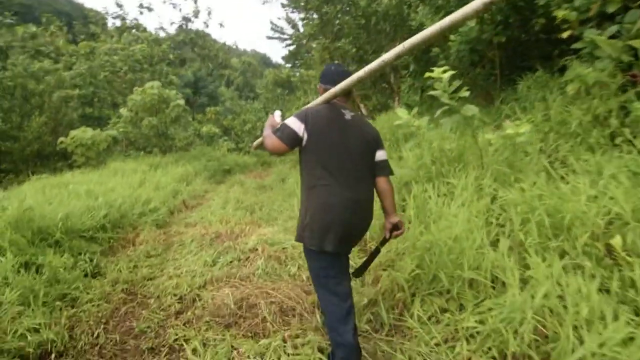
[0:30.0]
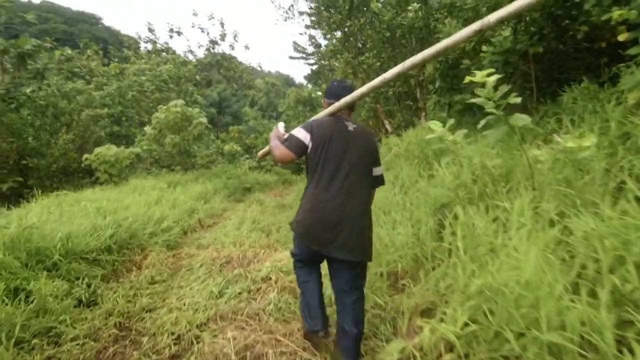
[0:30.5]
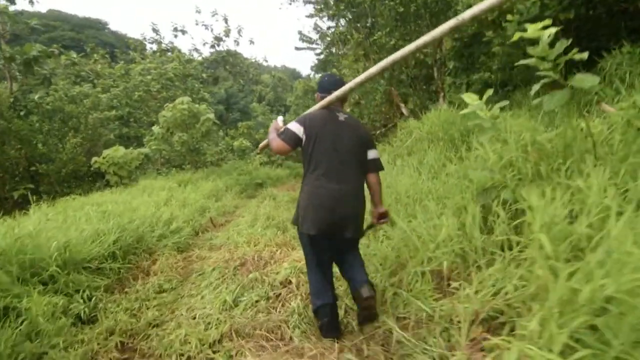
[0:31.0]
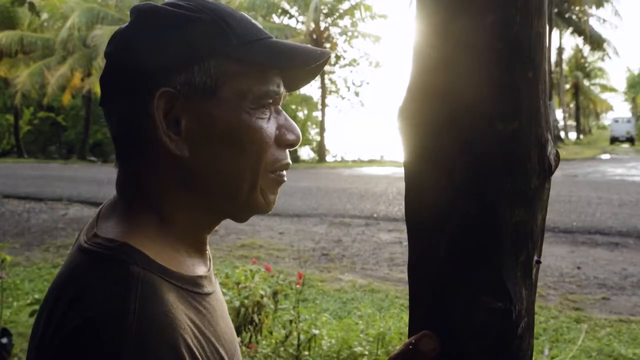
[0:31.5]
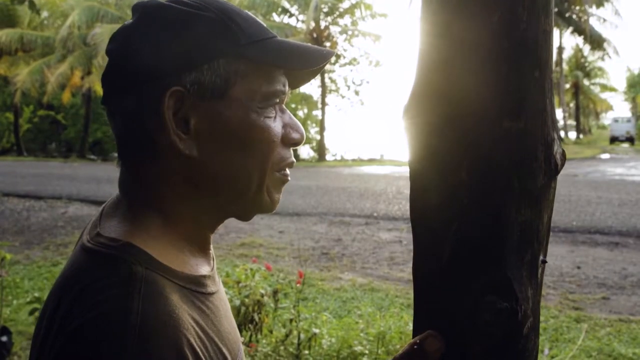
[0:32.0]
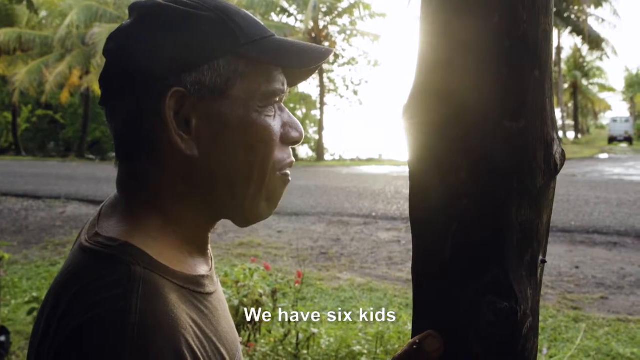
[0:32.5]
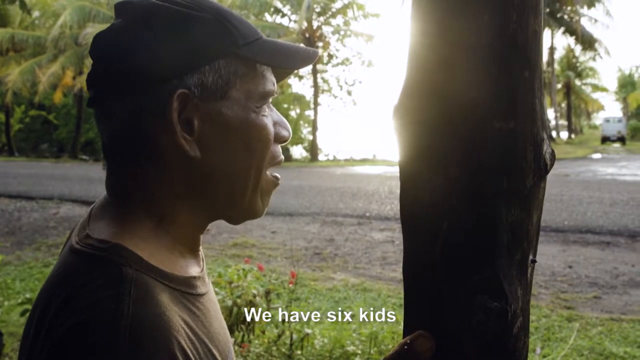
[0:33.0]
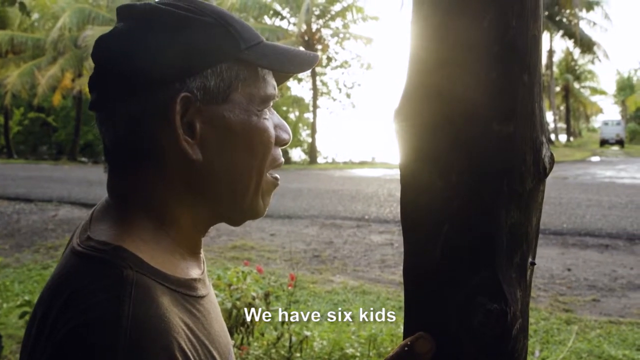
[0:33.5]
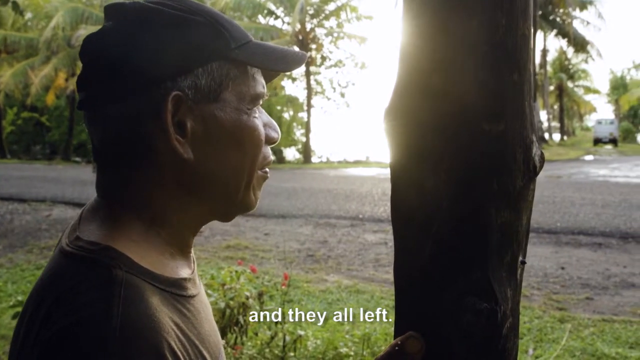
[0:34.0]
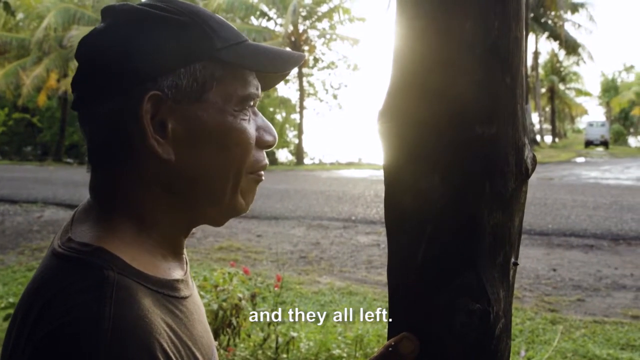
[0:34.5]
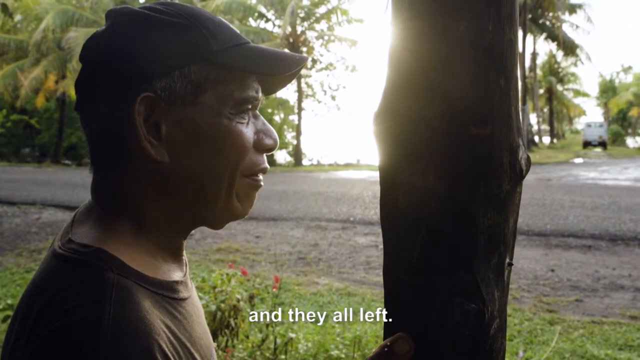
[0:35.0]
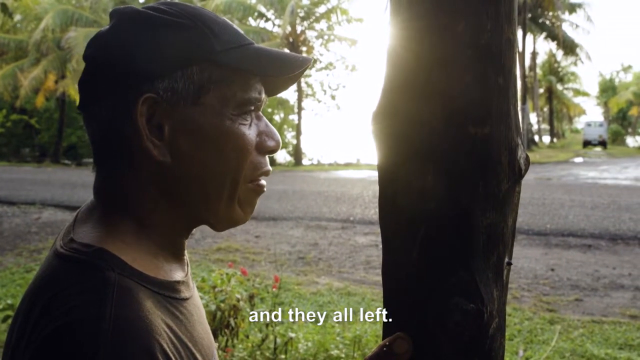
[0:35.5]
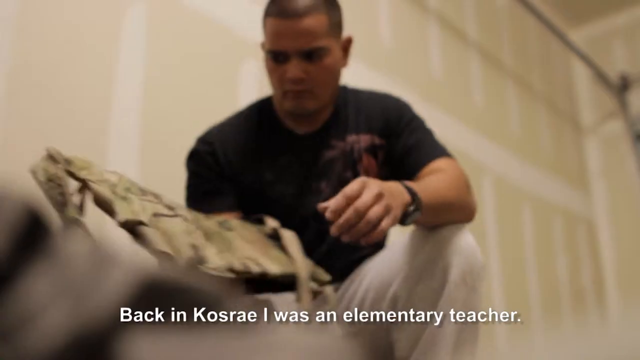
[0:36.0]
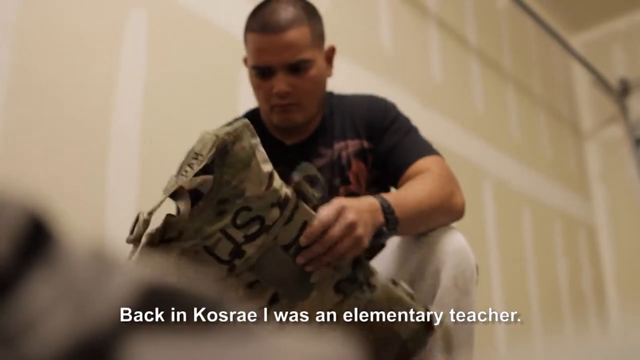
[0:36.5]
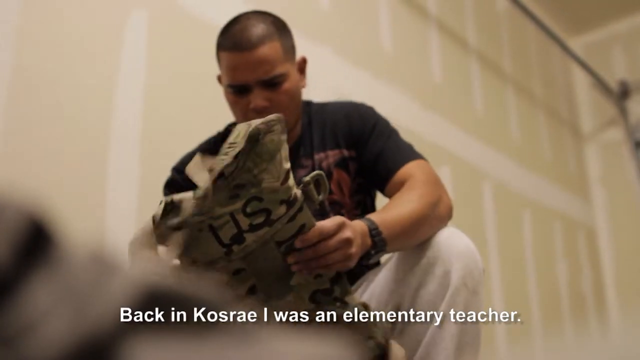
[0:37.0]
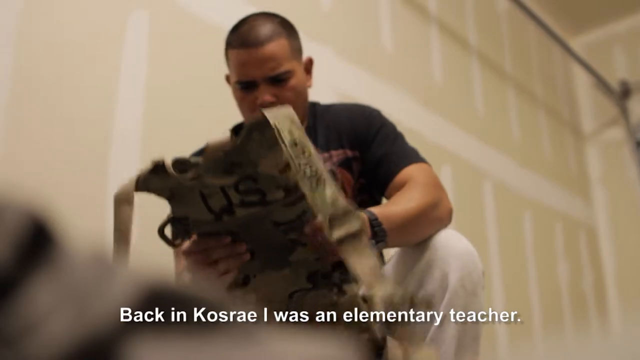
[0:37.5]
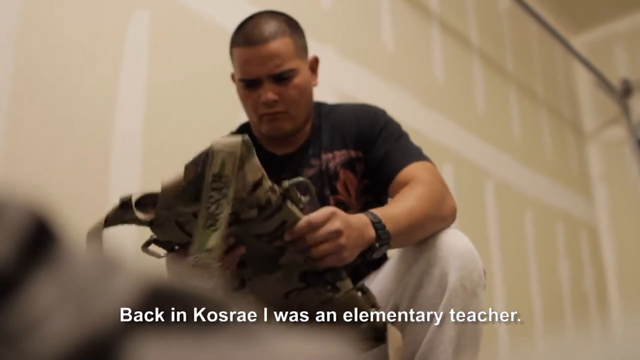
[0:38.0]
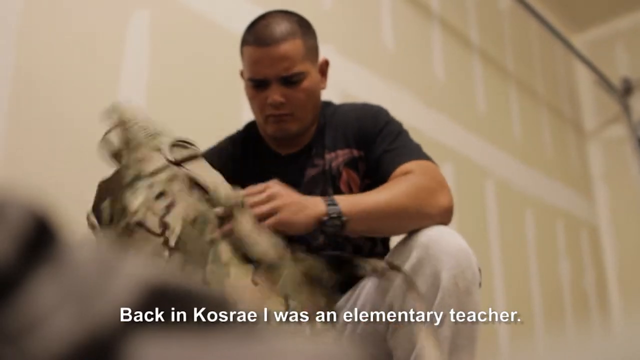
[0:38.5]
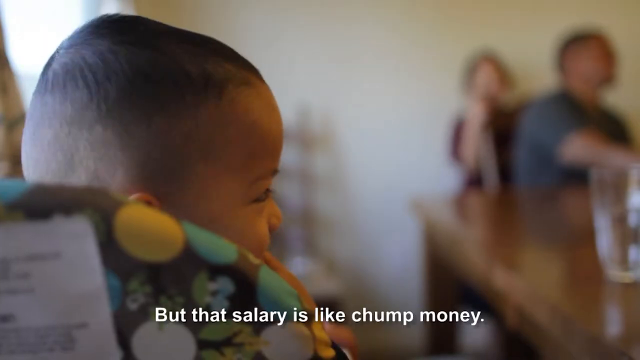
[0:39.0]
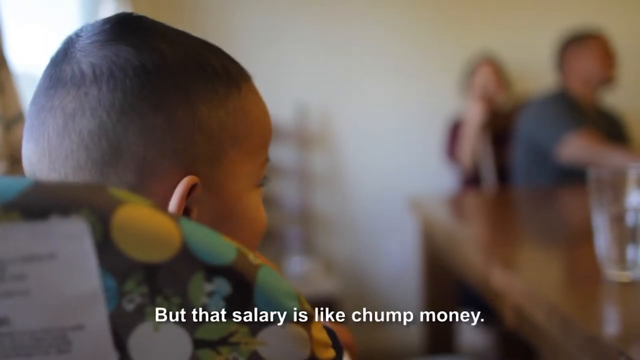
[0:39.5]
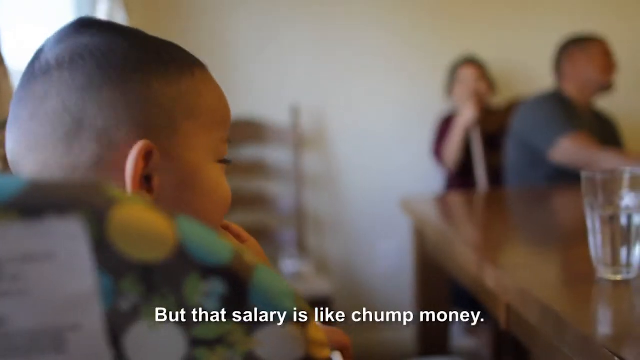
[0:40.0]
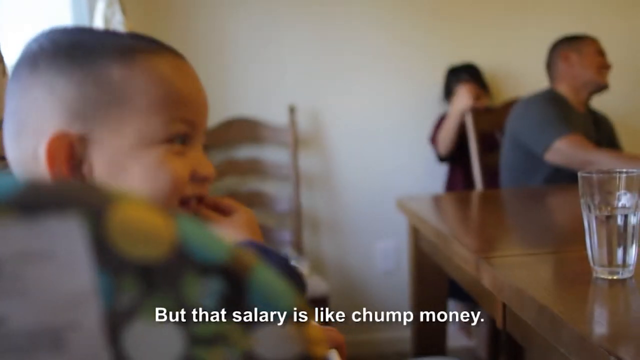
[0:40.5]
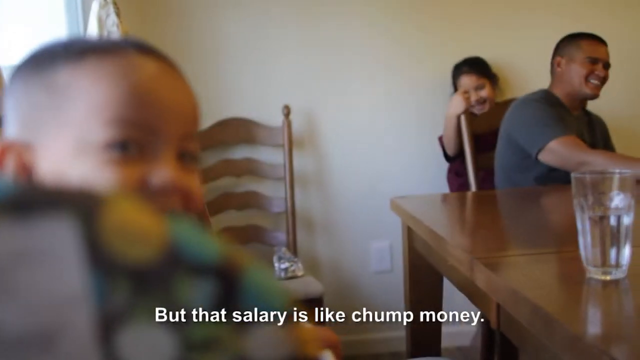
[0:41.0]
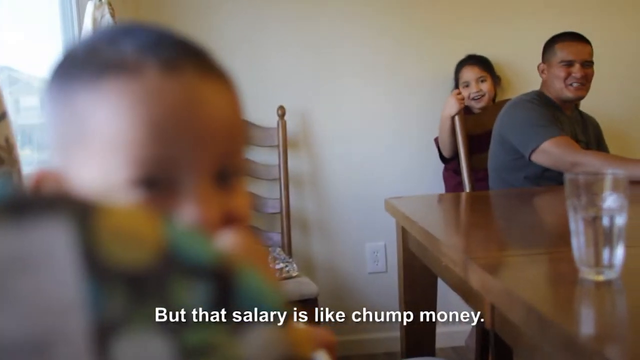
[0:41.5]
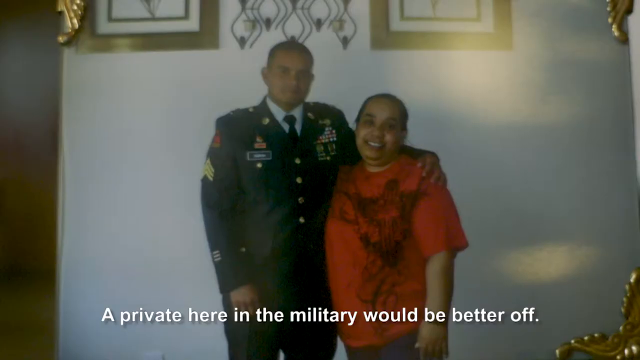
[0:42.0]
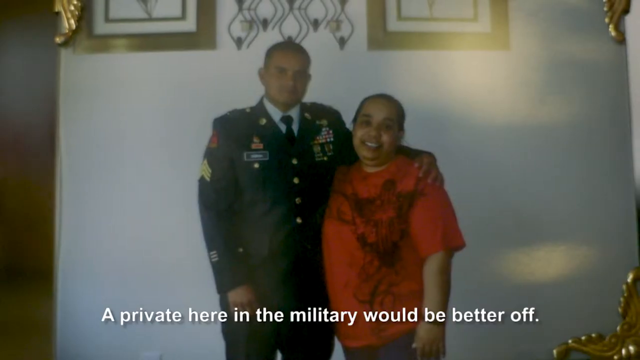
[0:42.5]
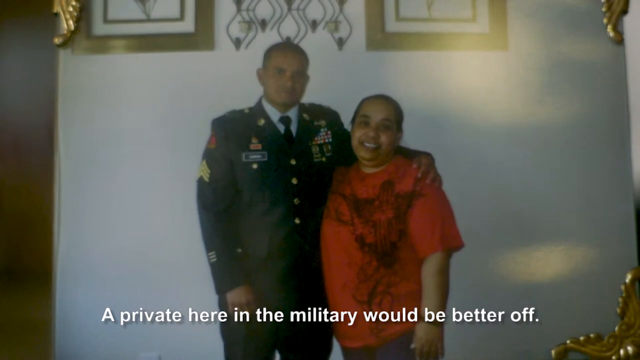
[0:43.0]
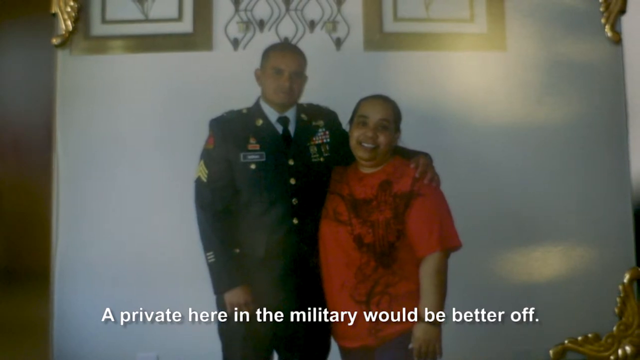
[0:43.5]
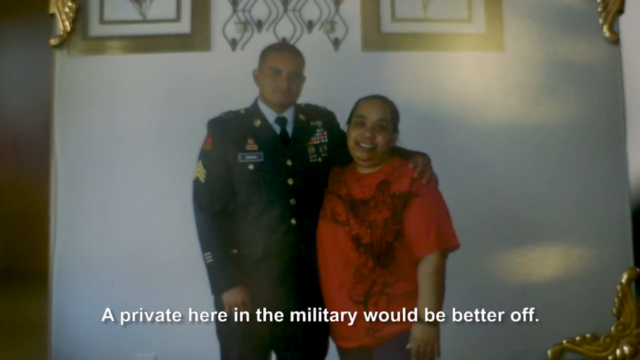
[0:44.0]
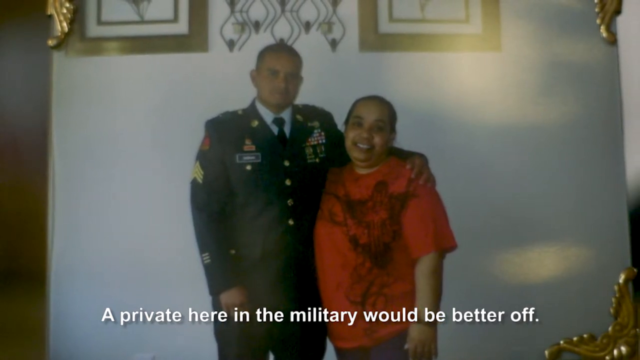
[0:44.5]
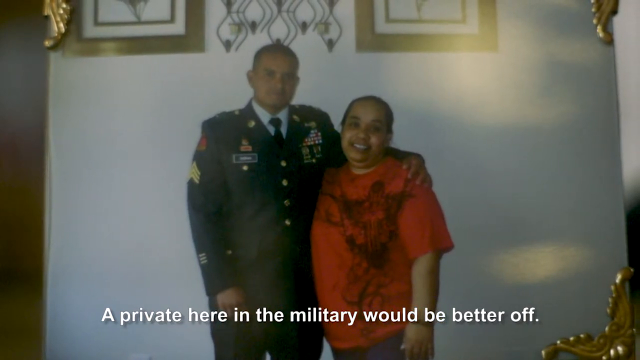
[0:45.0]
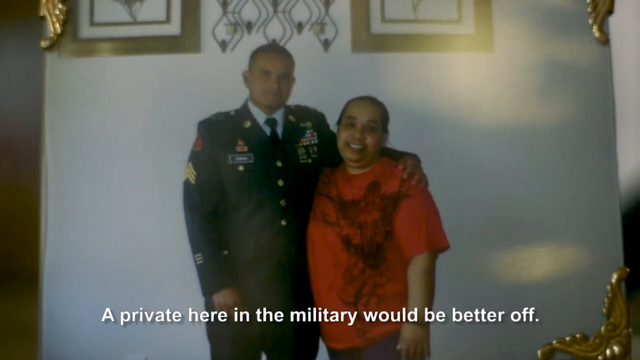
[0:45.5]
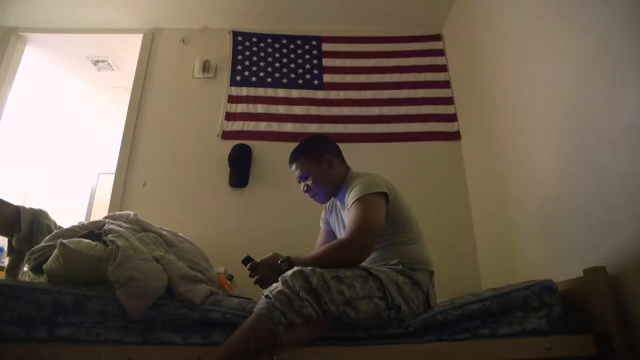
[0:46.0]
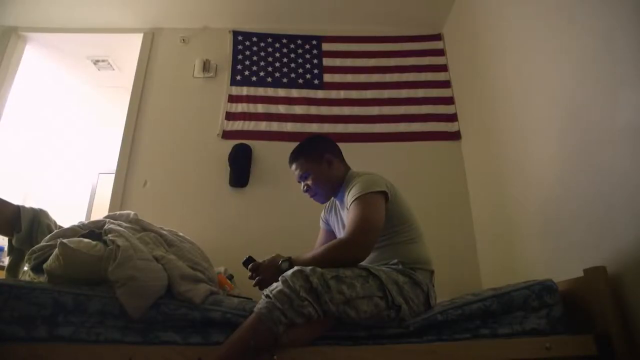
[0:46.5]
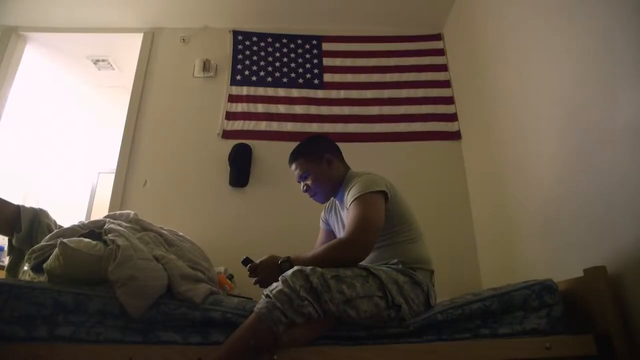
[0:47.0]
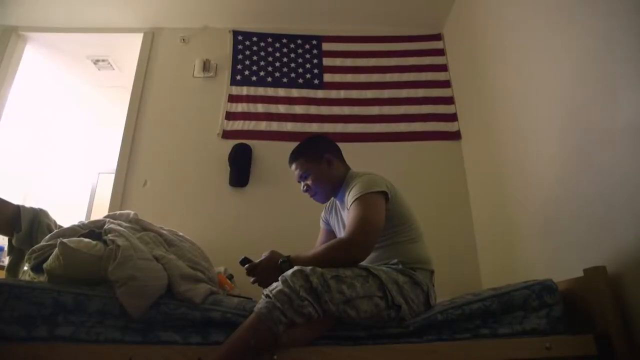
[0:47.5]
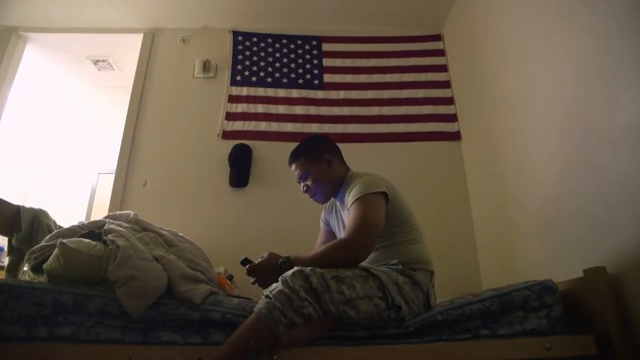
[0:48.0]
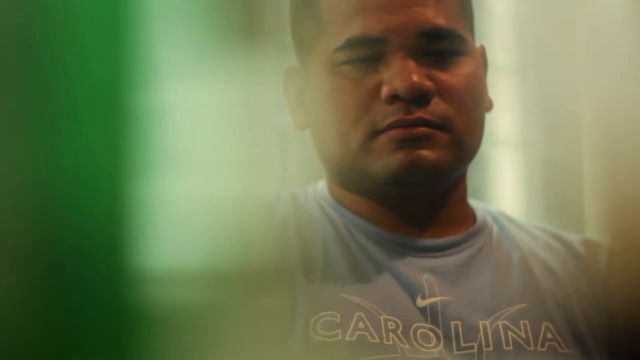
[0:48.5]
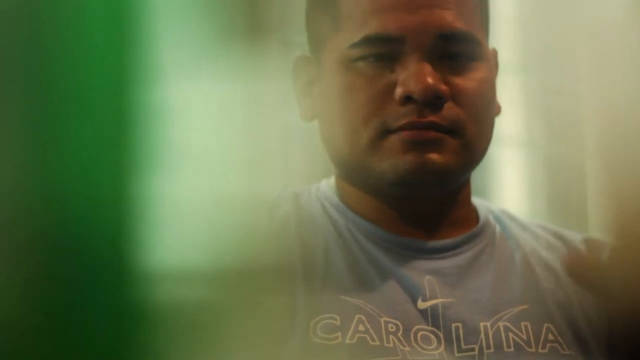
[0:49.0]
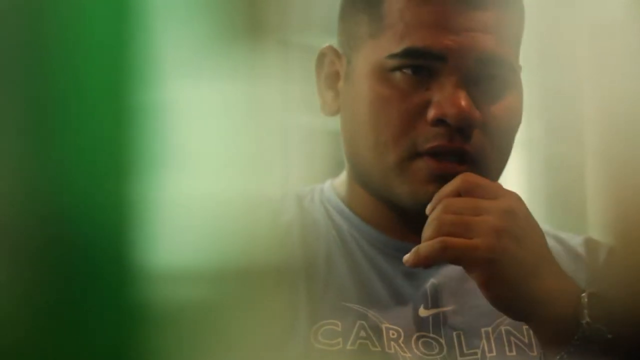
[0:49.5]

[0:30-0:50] A man is seen from behind in a black t-shirt with horizontal stripes on each sleeve, with what looks like a black scarf tied on his head. He carries a long bamboo-like pole on his left shoulder and holds a machete in his right hand as he walks through dense green grass toward a dense-looking forest. A side view then shows he actually wears a black cap. He stands beside a tree trunk, with sunlight radiating from the background between his face and the trunk. A transcription of his speech runs across the bottom of the screen: "we have six kids and they all left," followed by "I was an elementary teacher." Meanwhile, a man without a cap, in a black t-shirt and khaki pants, holds an army bulletproof vest in his hands. Two small children laugh in a living room; one stands behind the man, who is seated at a wooden table. Next, the man in military uniform has his hands across the shoulder of a smiling woman in a red t-shirt, their backs to a white wall in the house. A side view then shows the man on a bed, with a US flag draped on the corner of the wall above his head. His face looks sad as he rests his chin on his hand.